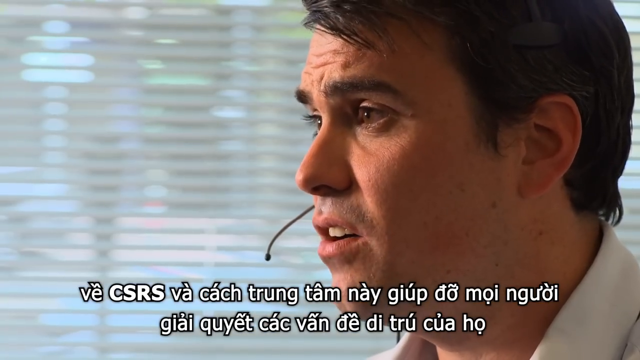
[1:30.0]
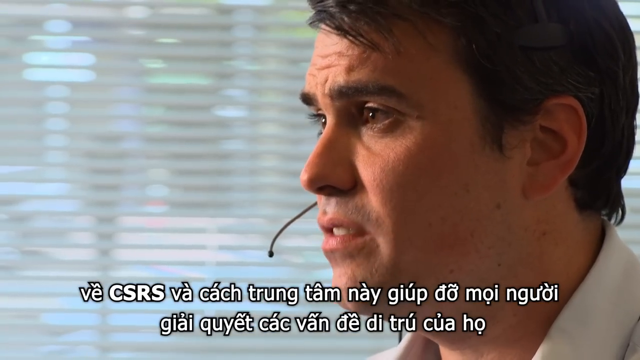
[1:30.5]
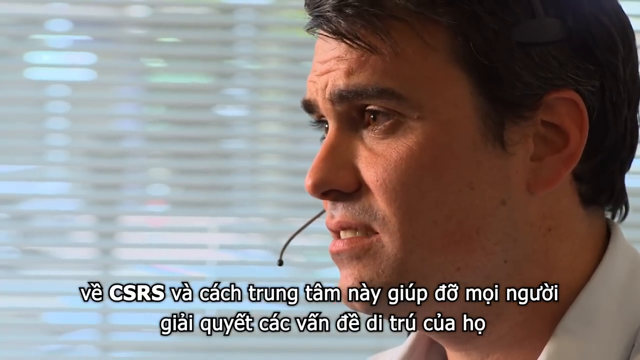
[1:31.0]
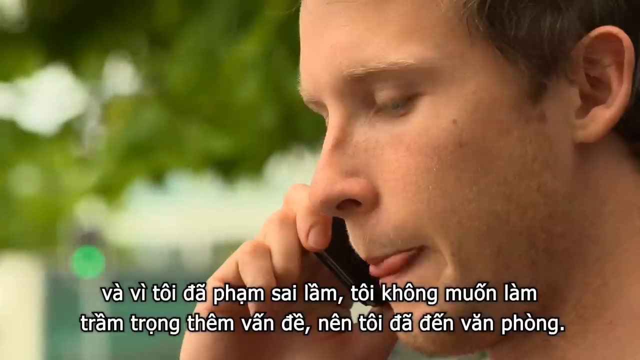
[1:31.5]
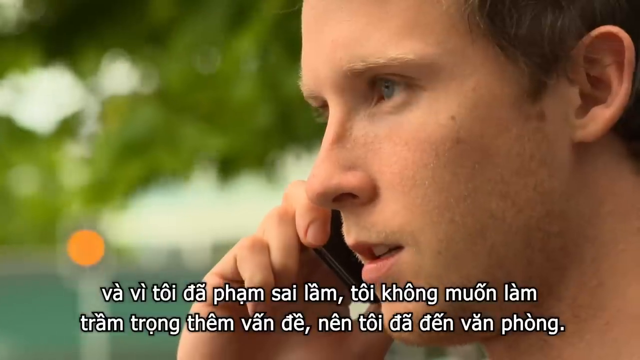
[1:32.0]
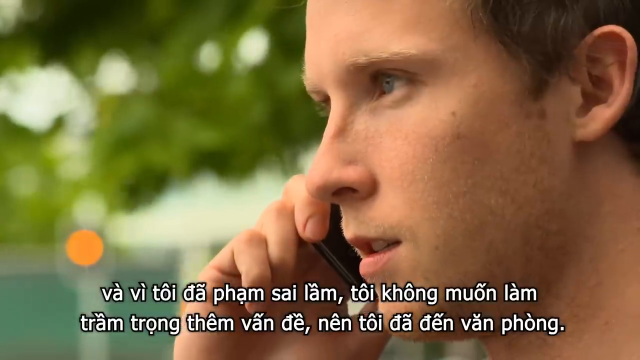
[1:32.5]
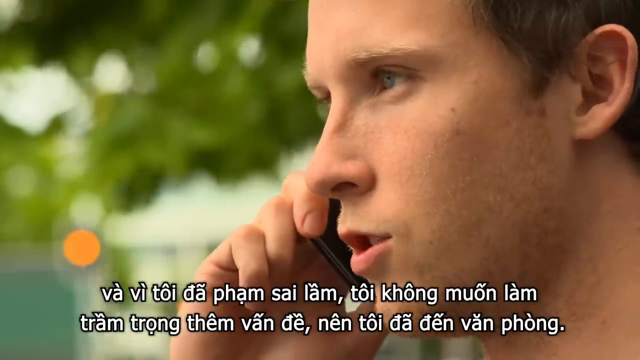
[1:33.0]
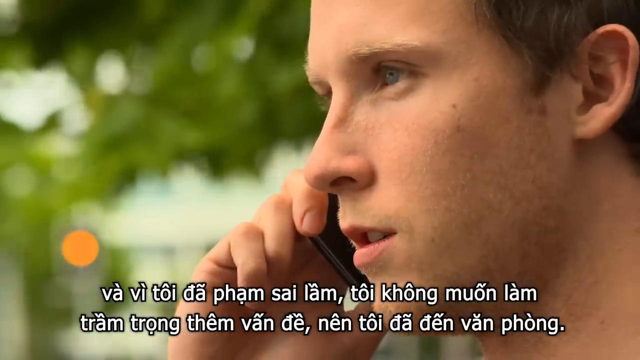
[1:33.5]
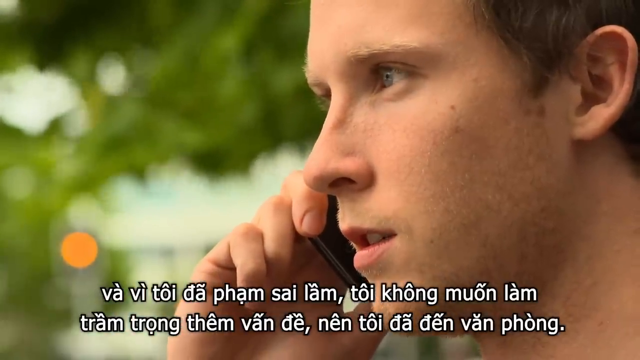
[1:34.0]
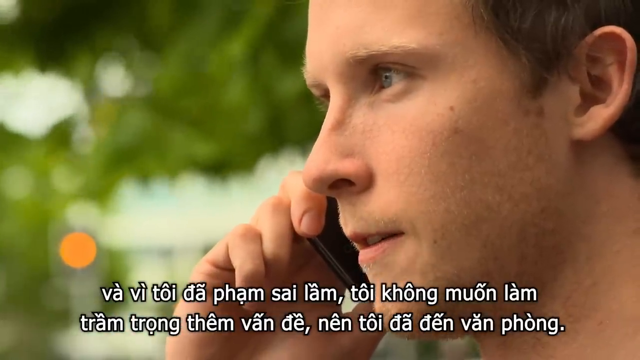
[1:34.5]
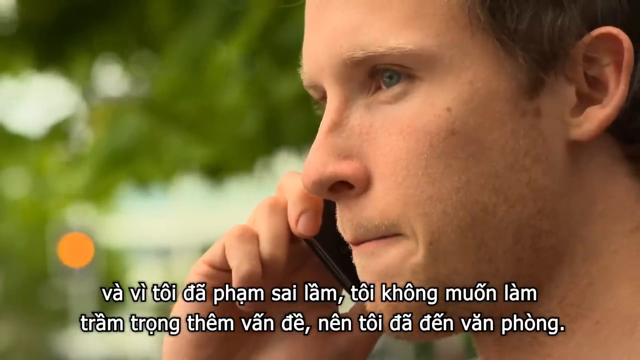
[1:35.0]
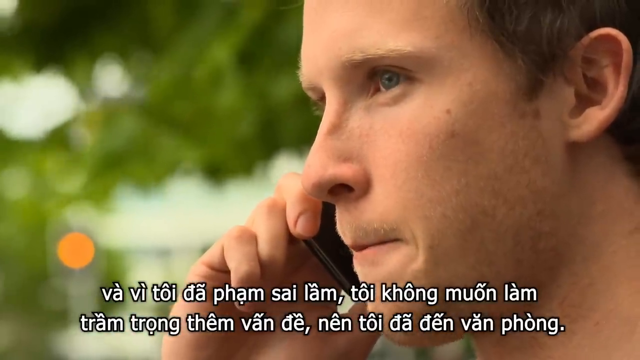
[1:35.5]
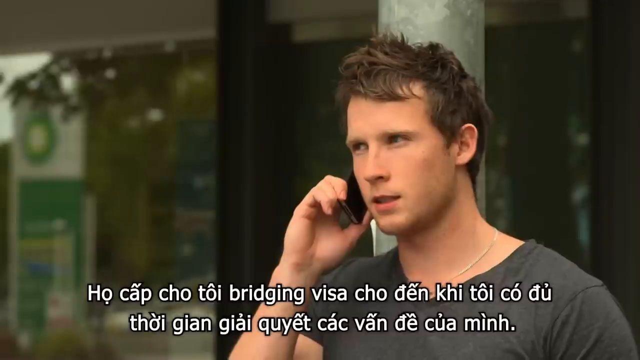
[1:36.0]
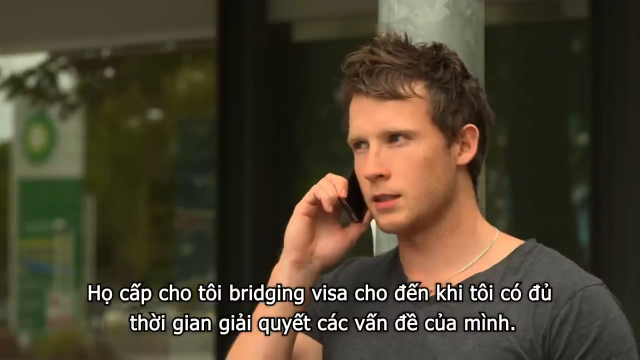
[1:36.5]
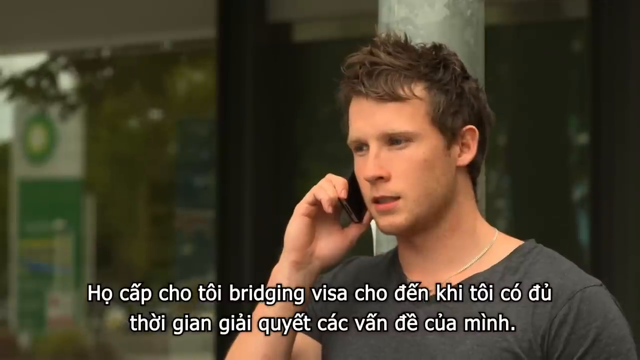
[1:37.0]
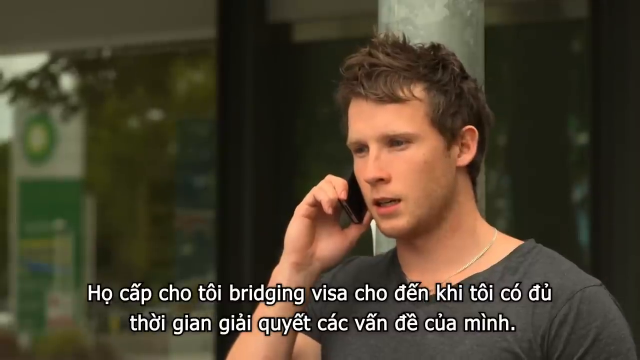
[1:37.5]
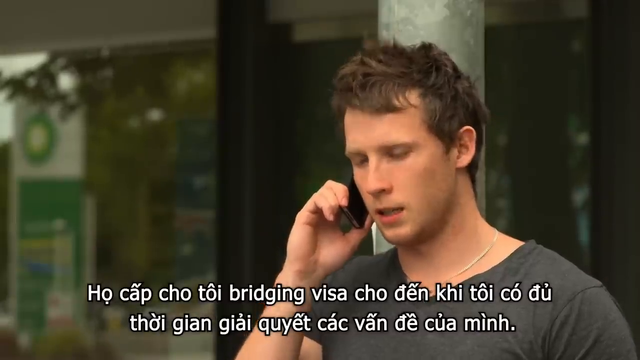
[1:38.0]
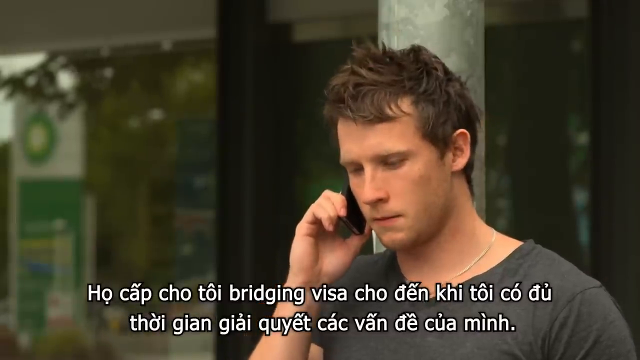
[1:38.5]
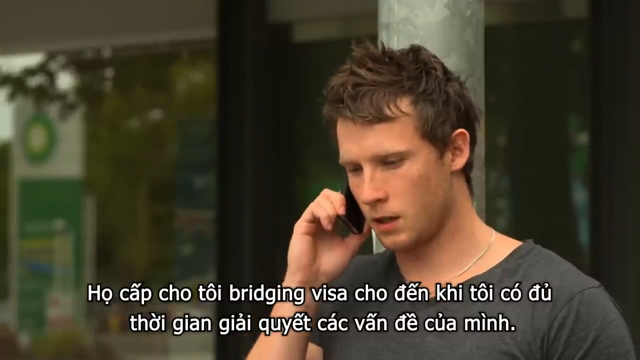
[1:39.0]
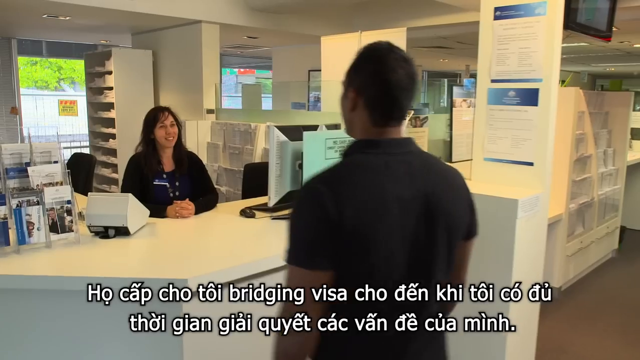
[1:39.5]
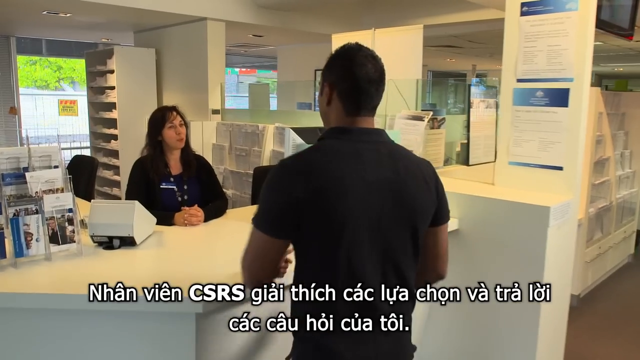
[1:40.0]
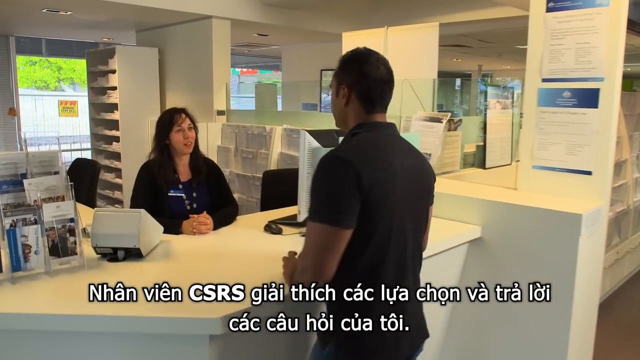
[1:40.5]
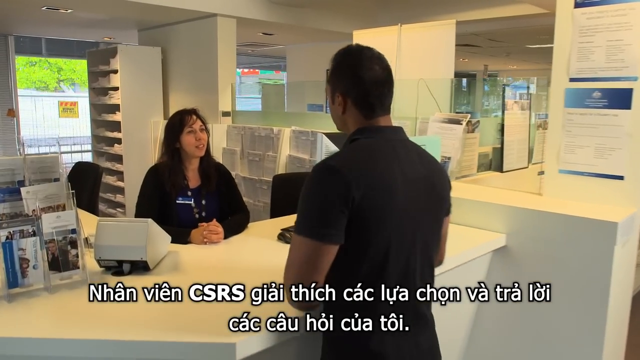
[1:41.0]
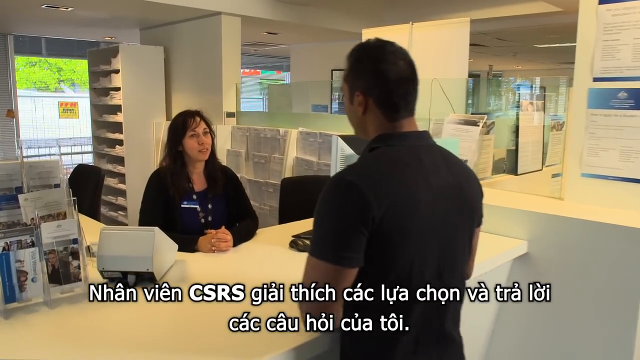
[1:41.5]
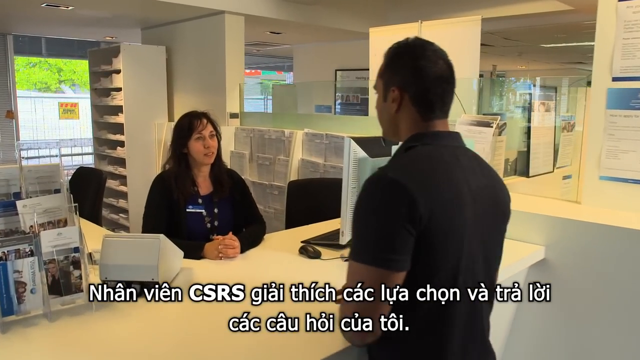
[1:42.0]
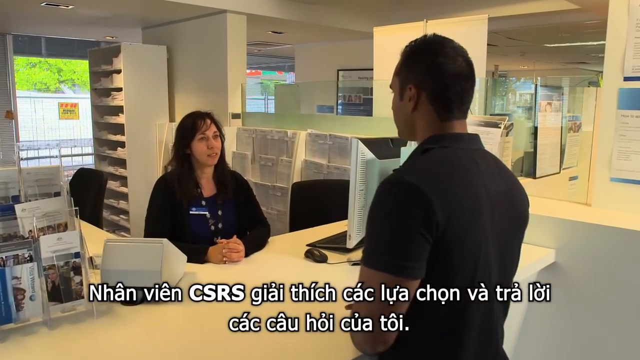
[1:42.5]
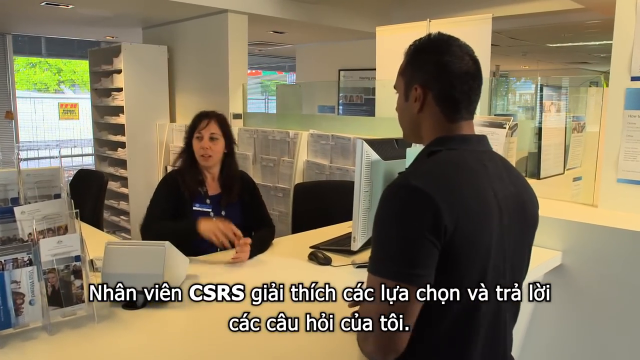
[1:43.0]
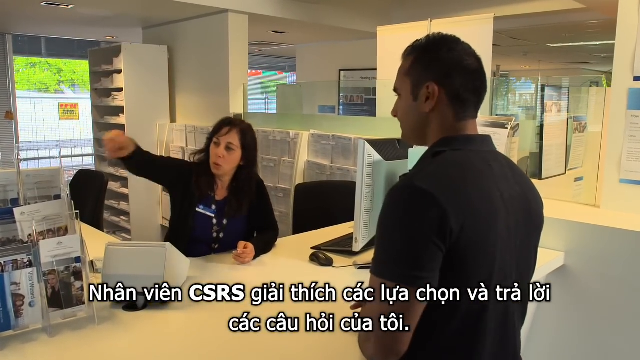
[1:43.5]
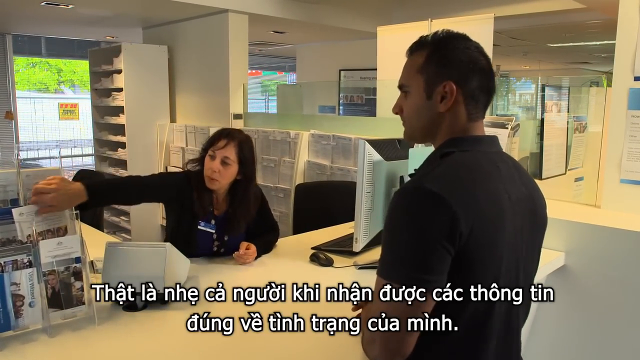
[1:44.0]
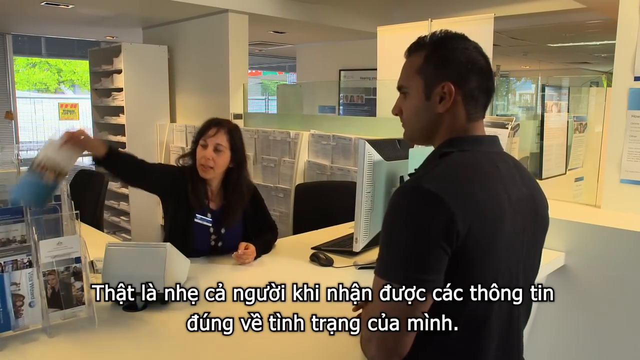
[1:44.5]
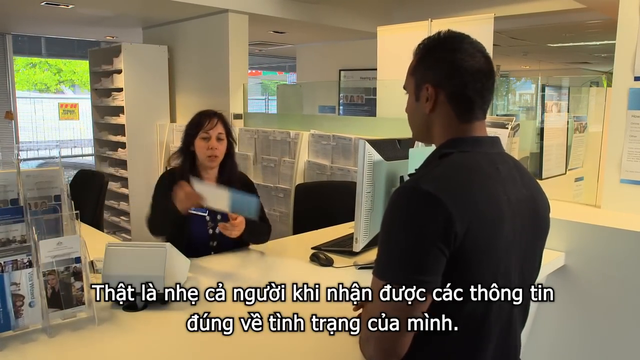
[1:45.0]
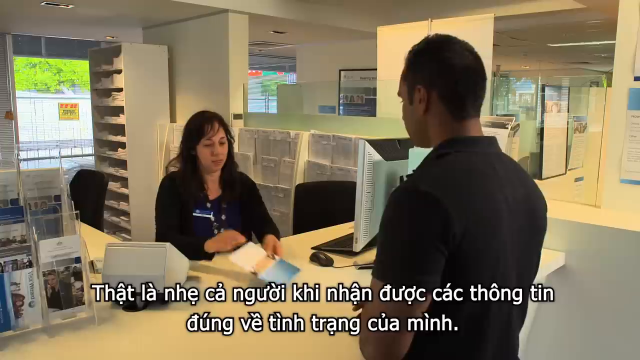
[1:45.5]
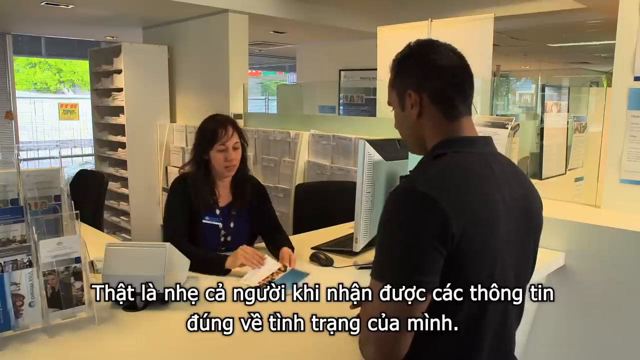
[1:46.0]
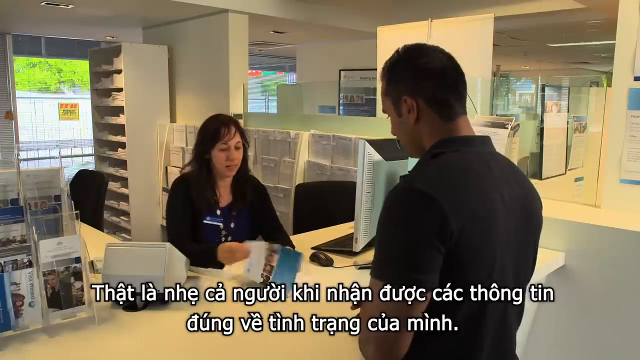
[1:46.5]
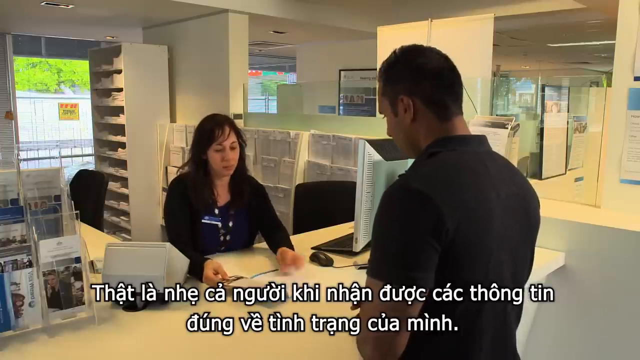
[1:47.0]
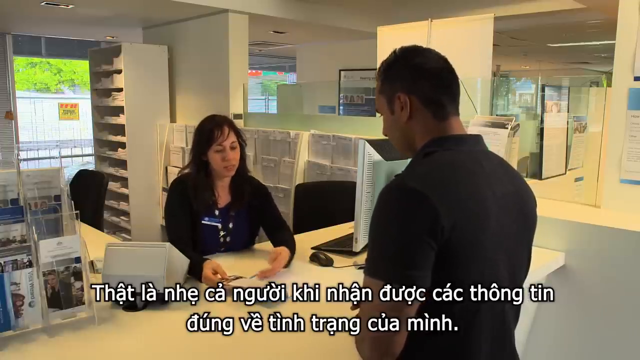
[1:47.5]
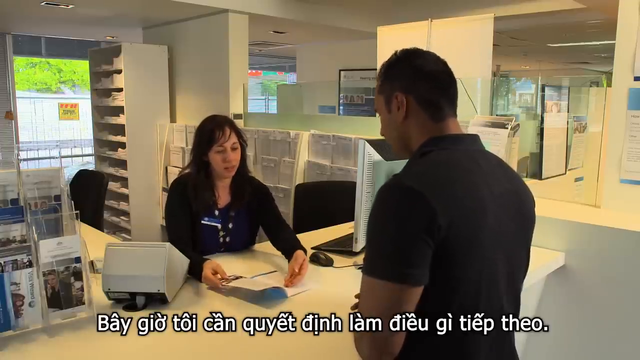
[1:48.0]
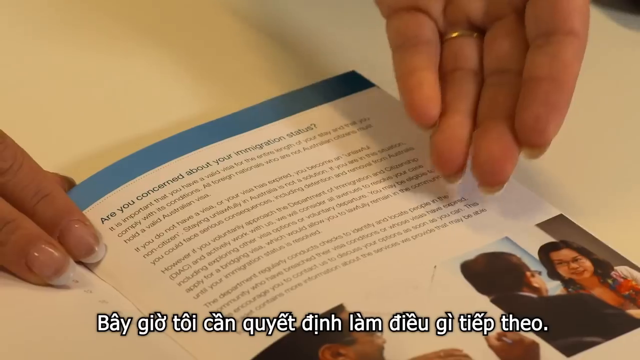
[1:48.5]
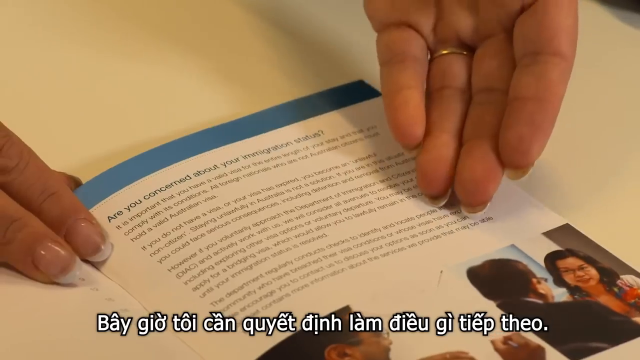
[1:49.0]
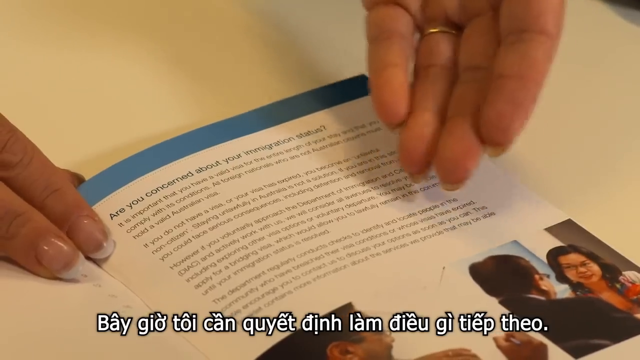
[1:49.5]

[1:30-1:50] The telemarketer has lines behind him like a window. He looks to be in his late 20s; only his shirt collar and everything above it are visible. He appears to have brown eyes, and the top row of his teeth shows as he looks to his left while speaking. The white man on the phone appears to talk back and forth with him, looking very serious in a close-up. He licks his lips, holding the phone in his right hand with three fingers on top and his thumb underneath, and nods. The Indian man then comes up in what looks like some kind of office, where a receptionist talks with him. On the left is a holder with different pamphlets. A white machine, almost like a small cube-shaped TV, is slanted toward her. Her hands are clasped and she looks on; he seems to ask about something, and she pulls off one of the pamphlets, spreads it open with her right hand and uses her left hand to show him what it is about. He nods. On the left of the office is a freestanding shelving unit full of stacks of papers, about 12 or 15 of them.